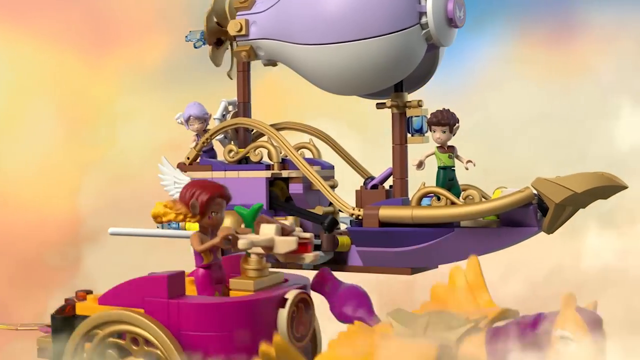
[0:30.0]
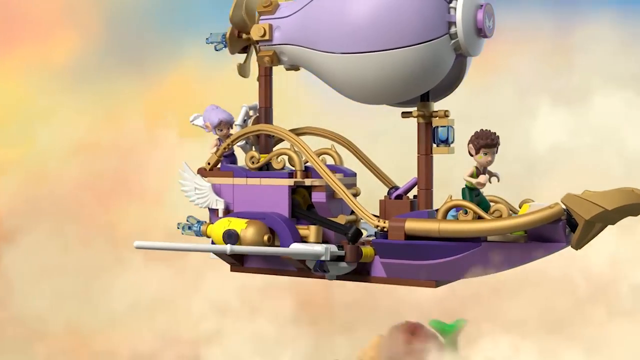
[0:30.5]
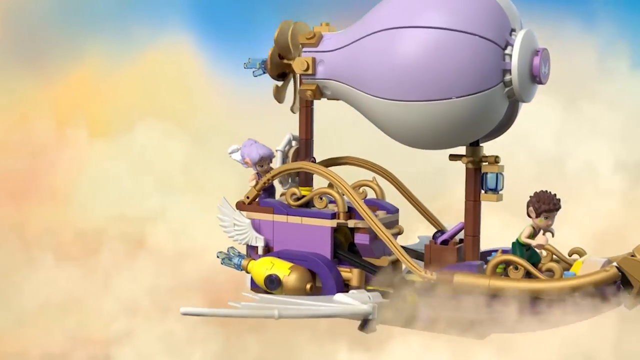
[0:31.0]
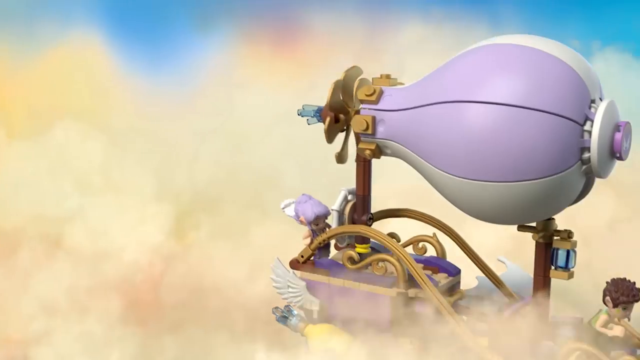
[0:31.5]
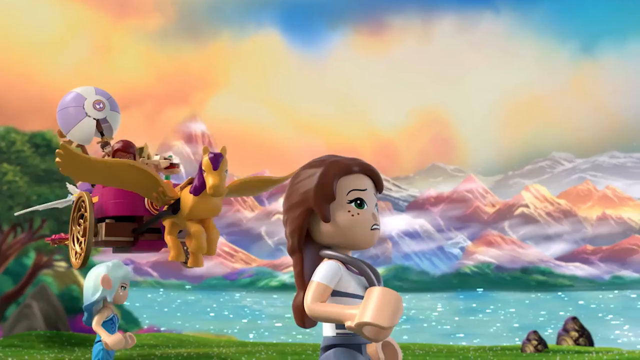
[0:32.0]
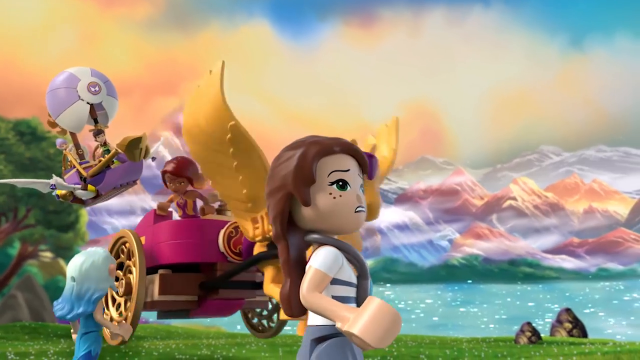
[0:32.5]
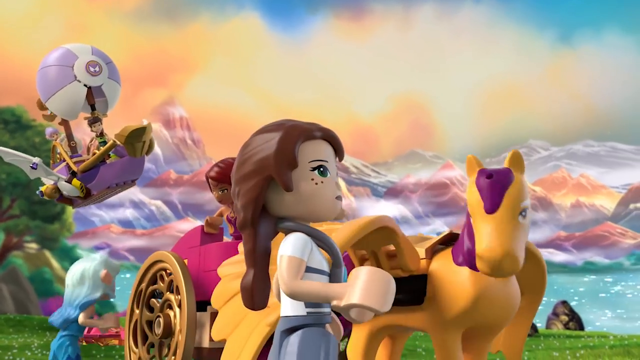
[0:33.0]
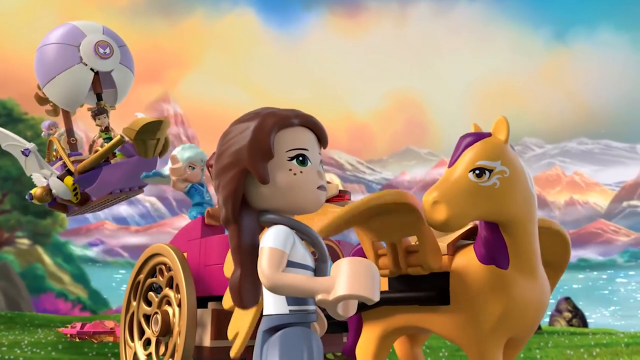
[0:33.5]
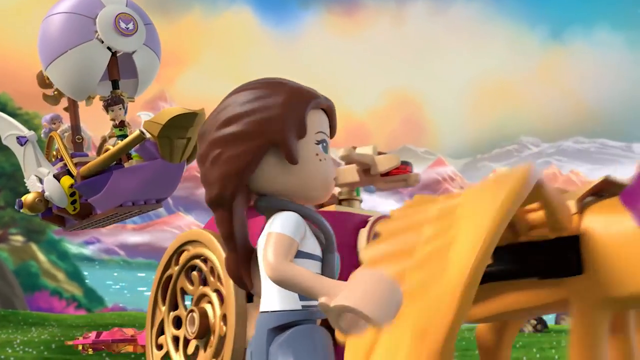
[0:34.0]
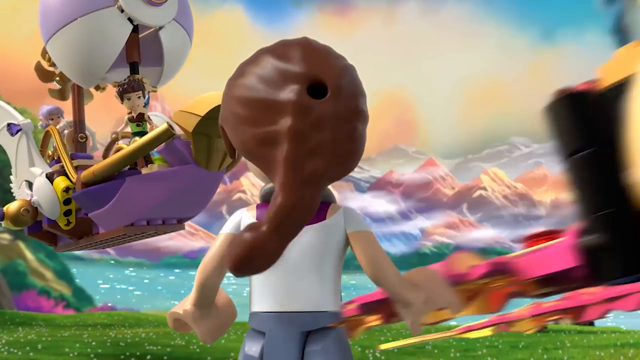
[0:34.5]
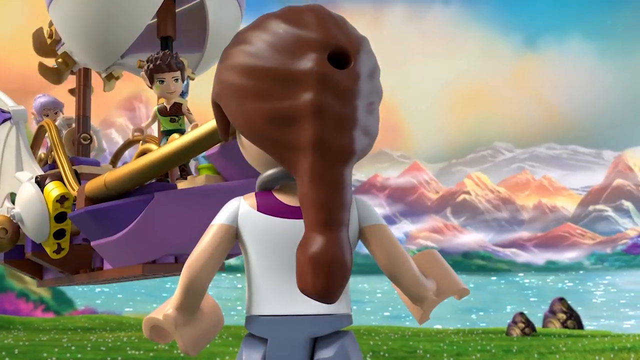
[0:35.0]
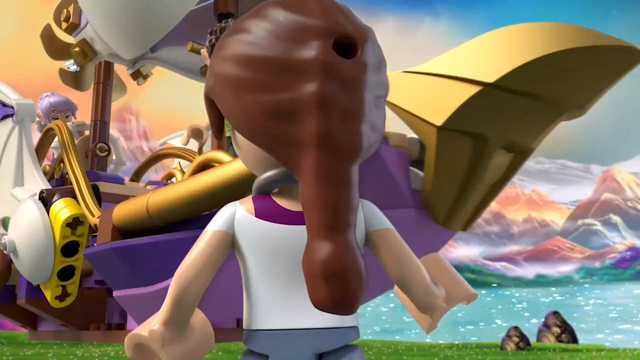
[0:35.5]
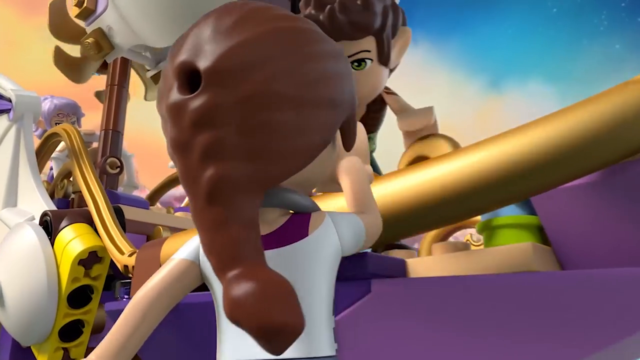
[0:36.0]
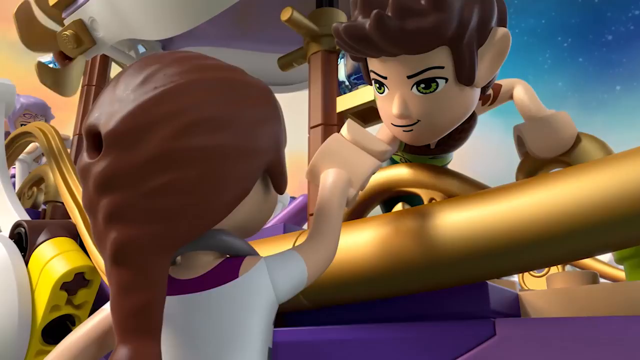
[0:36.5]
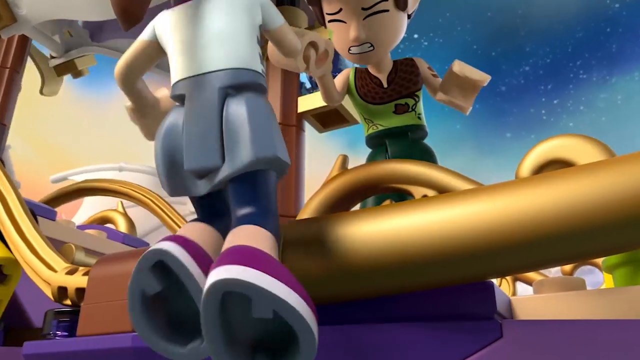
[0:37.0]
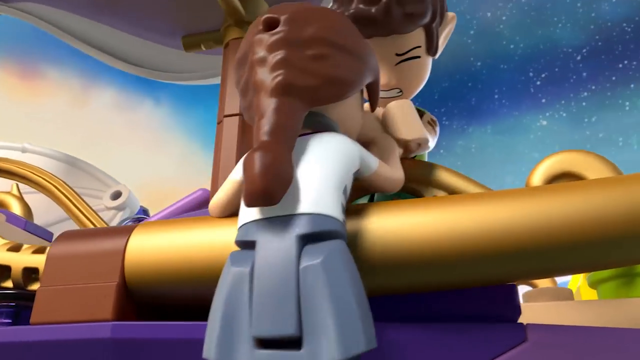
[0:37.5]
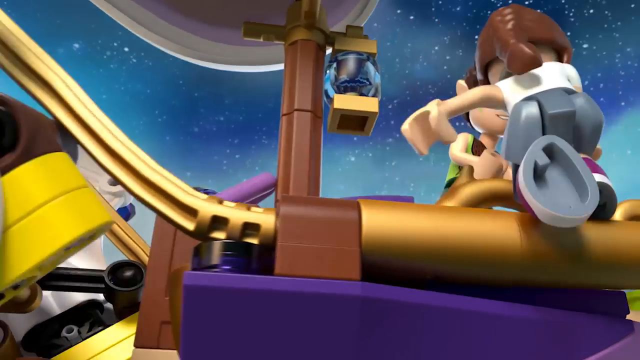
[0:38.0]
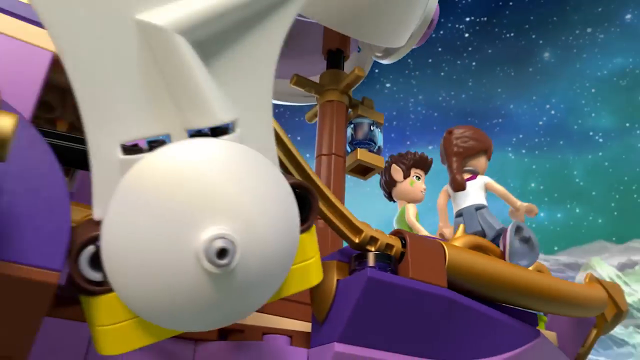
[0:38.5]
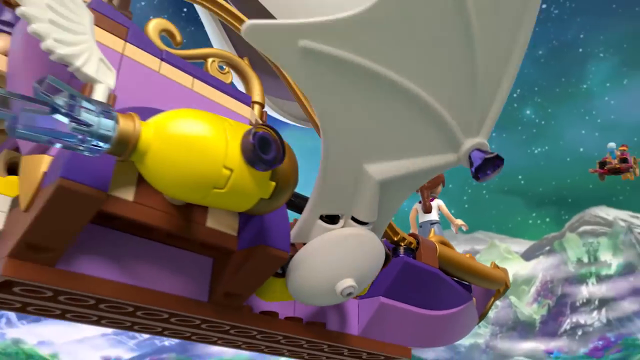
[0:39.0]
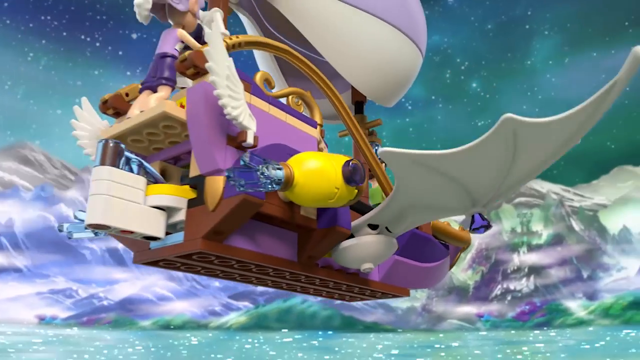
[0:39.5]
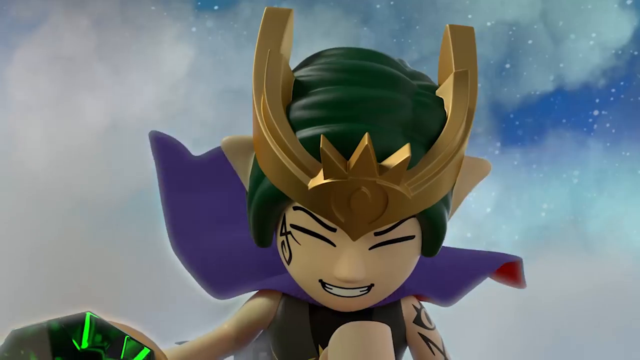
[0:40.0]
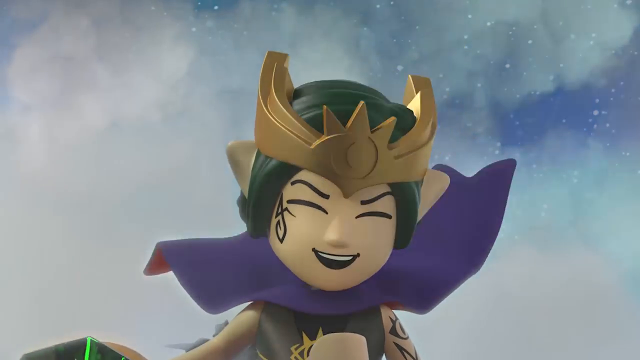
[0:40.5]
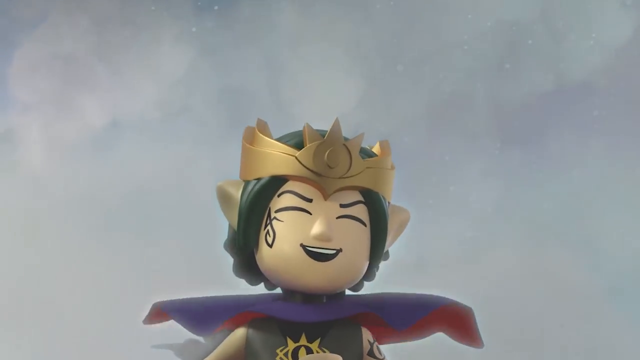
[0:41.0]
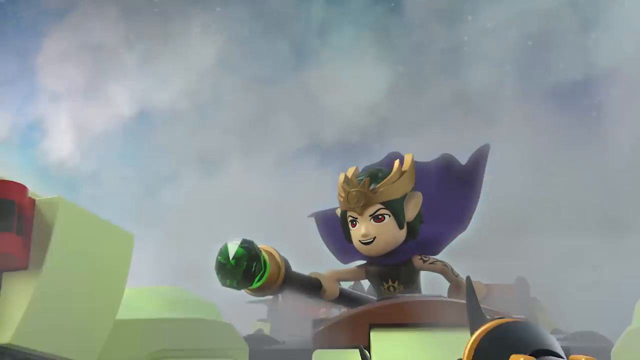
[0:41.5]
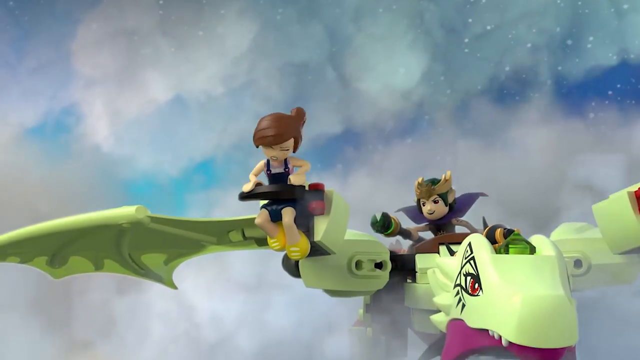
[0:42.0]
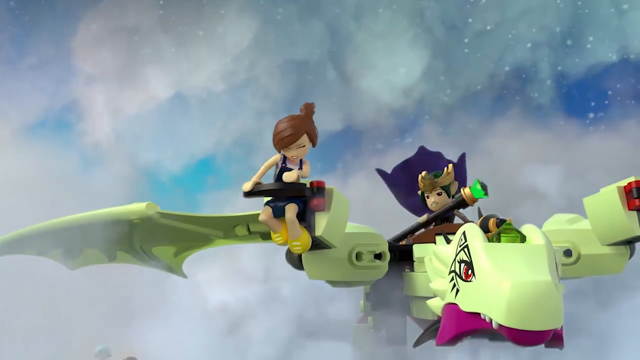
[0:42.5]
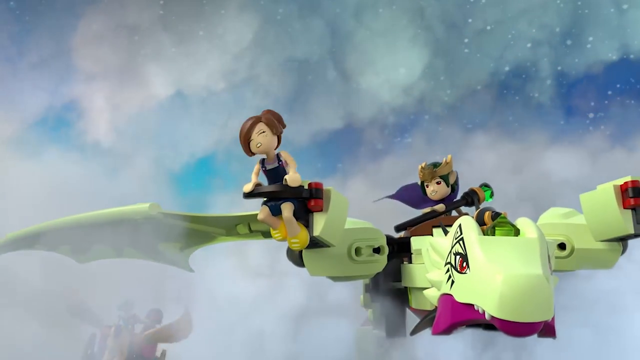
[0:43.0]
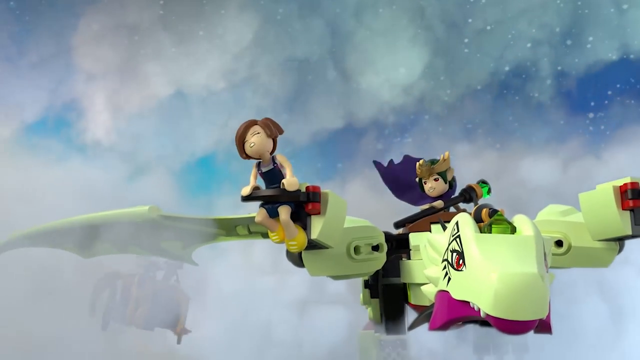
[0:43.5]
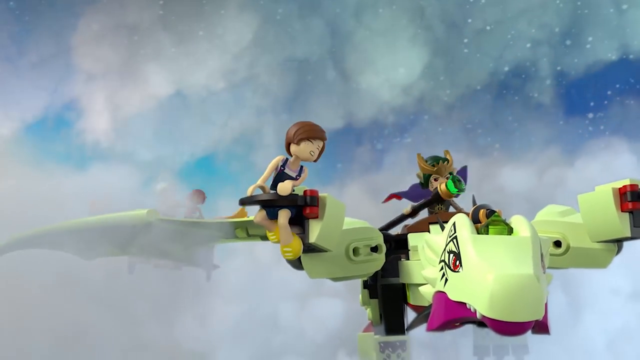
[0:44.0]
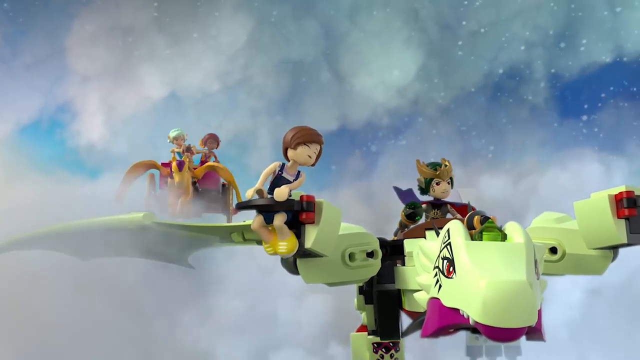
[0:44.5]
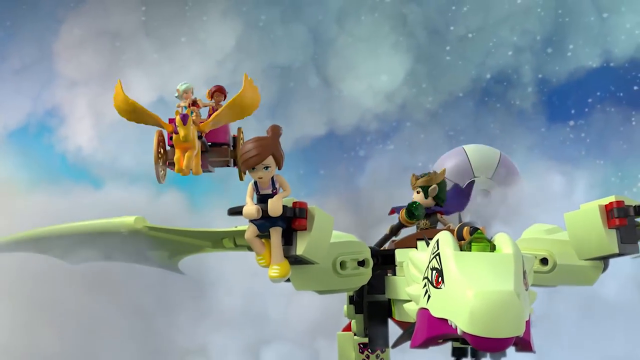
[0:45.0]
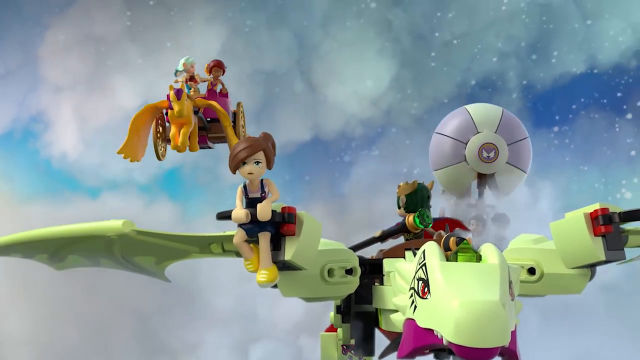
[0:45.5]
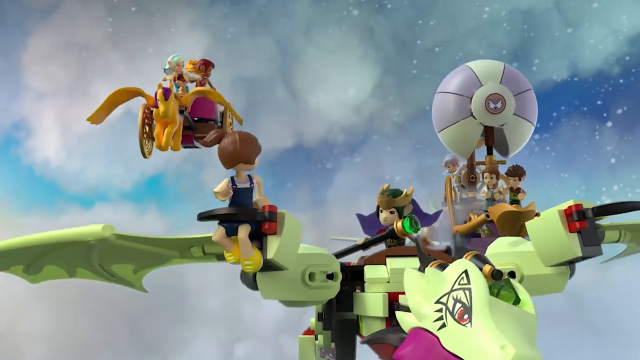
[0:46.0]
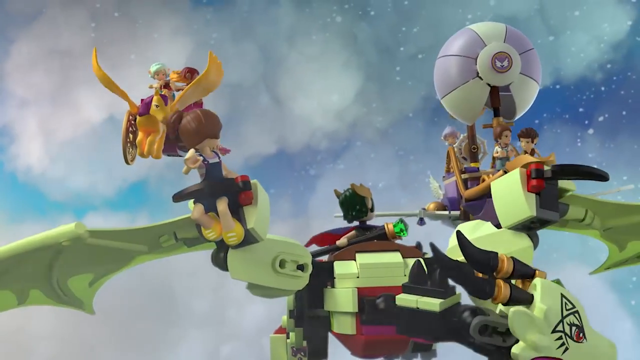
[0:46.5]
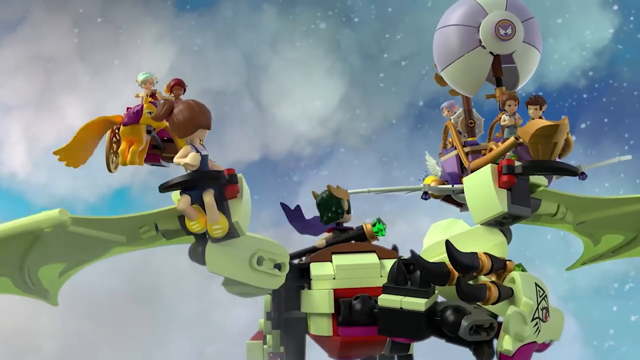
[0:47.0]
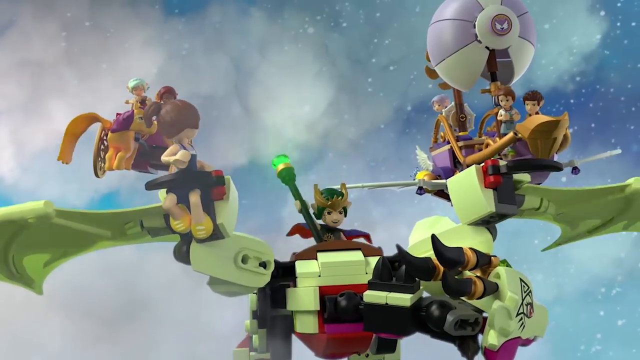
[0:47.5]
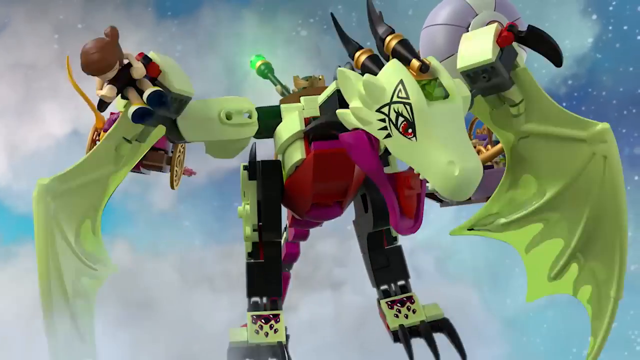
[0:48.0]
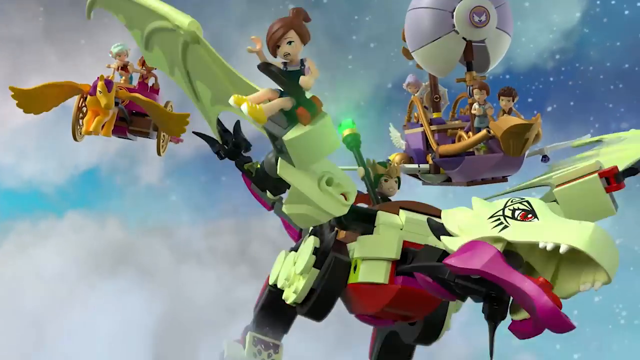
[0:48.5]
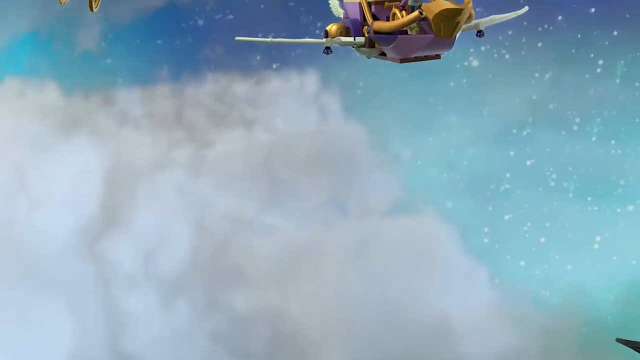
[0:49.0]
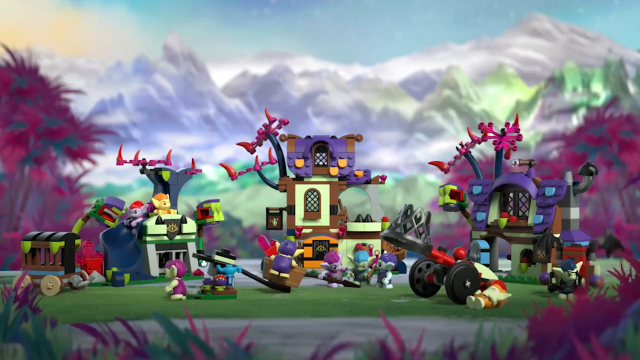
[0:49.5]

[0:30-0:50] The airship and the flying horse carriage descend to the ground, and the people on them pick up both girls. The elf is picked up first and hops into the flying horse carriage; then the girl with brown hair, who looks like the bigger sister of the kidnapped girl, is pulled up into the flying airboat, which is purple. They fly up into the sky. The camera cuts to what looks to be a more evil character, like a witch, with green hair. She holds a wand with a shining emerald at its end and does what looks like an evil laugh. The kidnapped girl is being held by one of the wings of the dragon, which is green. As the witch looks around, she realizes that two groups of Lego people are in pursuit, and she and the dragon descend downwards and away.